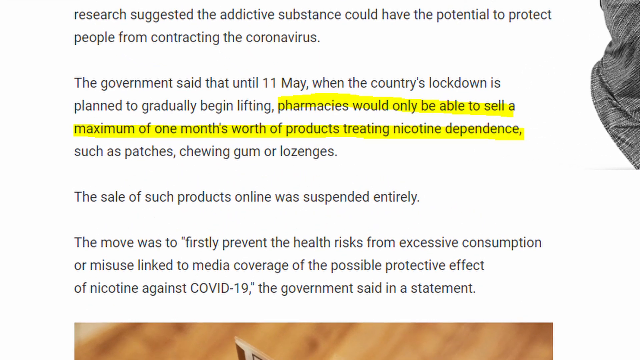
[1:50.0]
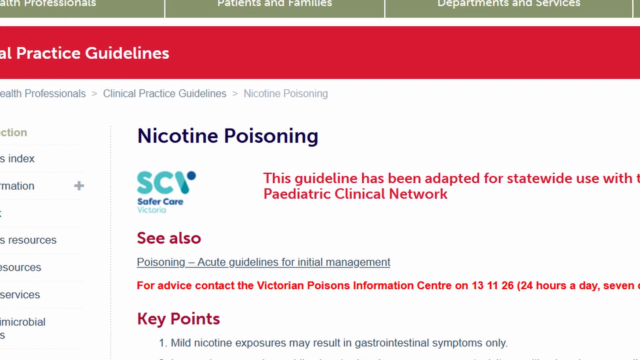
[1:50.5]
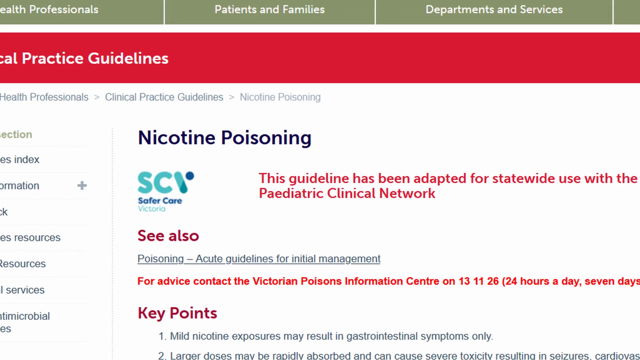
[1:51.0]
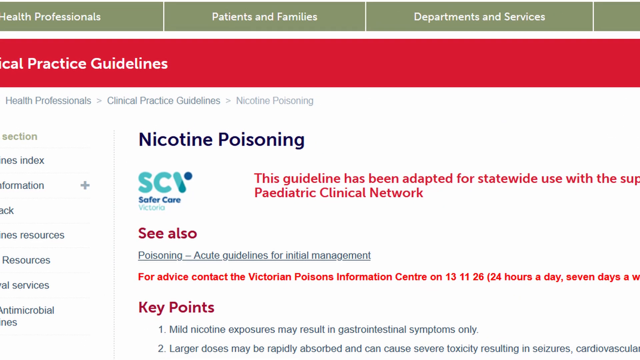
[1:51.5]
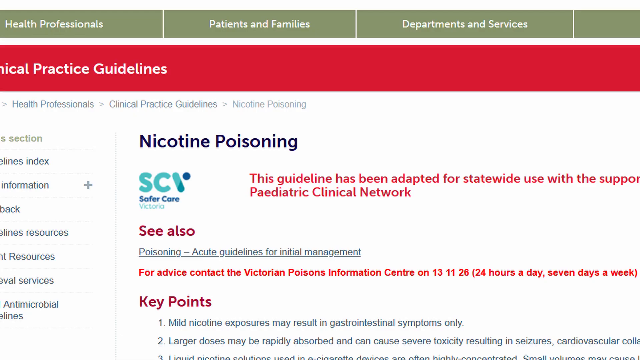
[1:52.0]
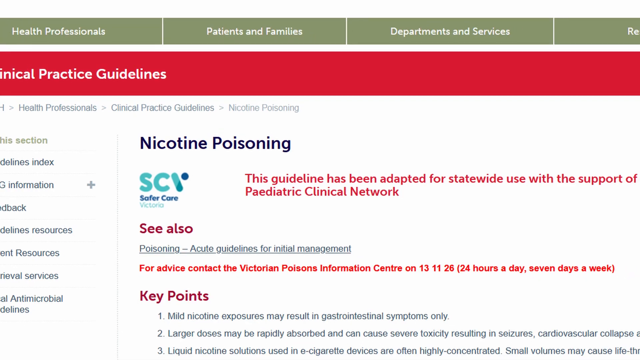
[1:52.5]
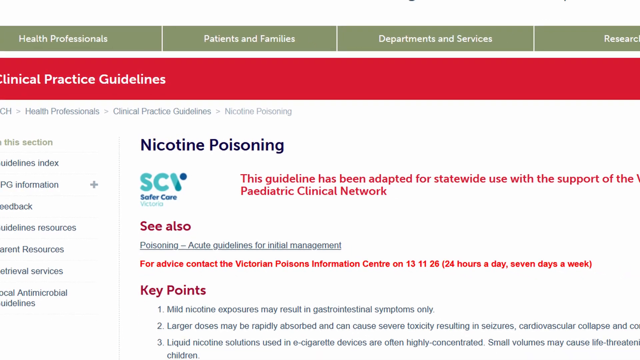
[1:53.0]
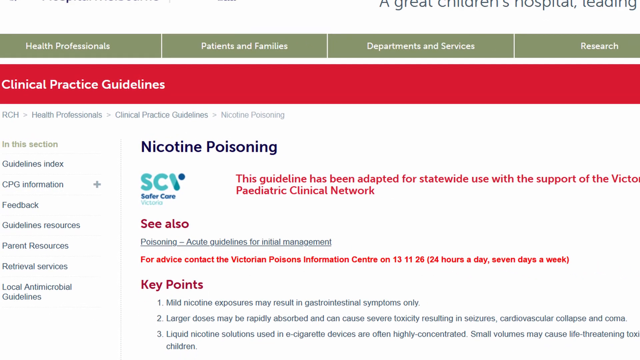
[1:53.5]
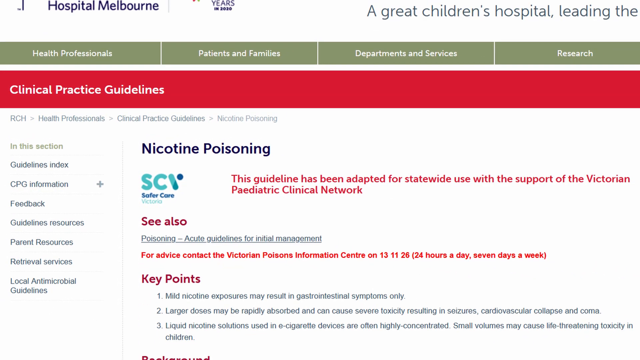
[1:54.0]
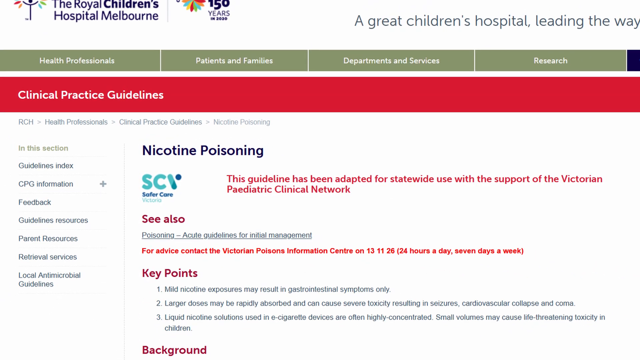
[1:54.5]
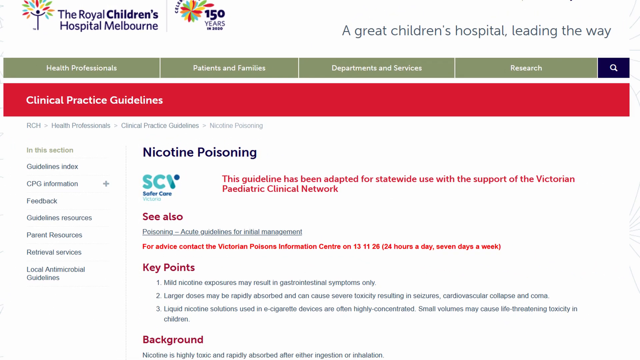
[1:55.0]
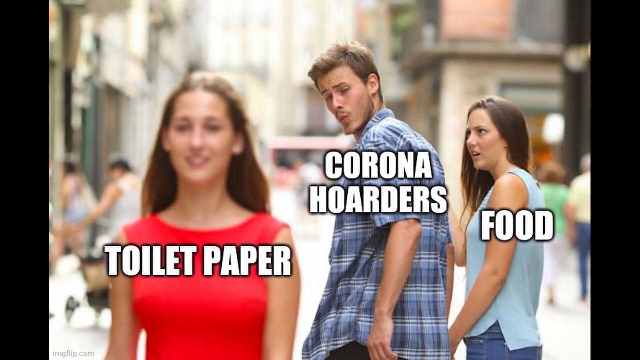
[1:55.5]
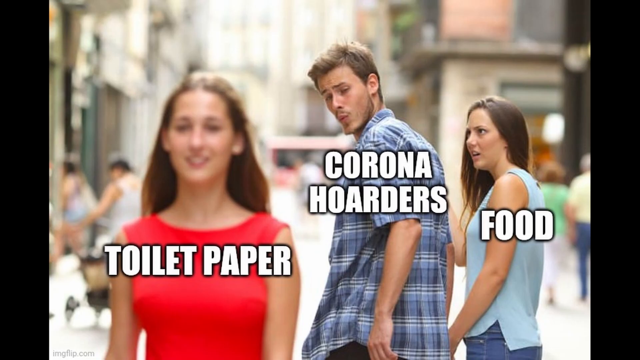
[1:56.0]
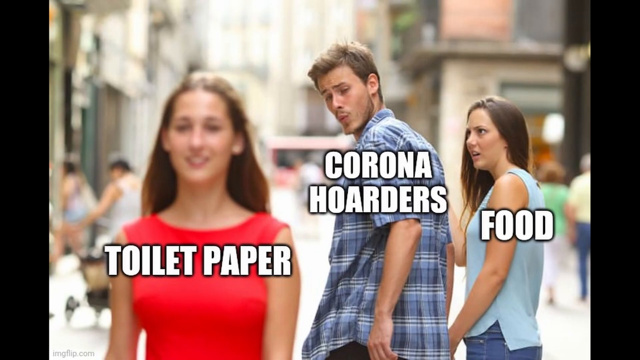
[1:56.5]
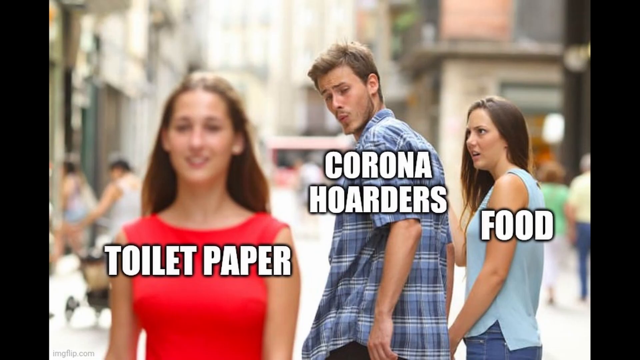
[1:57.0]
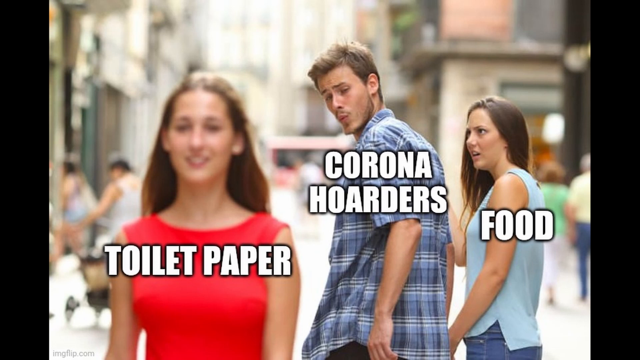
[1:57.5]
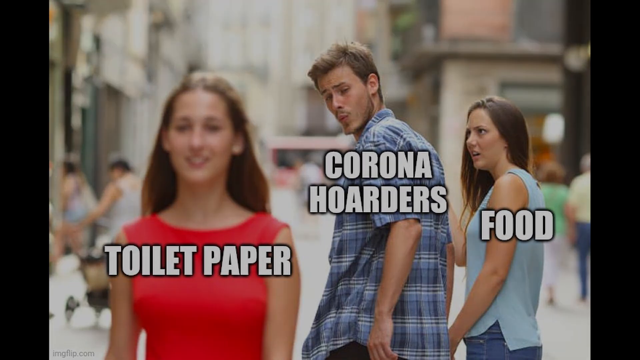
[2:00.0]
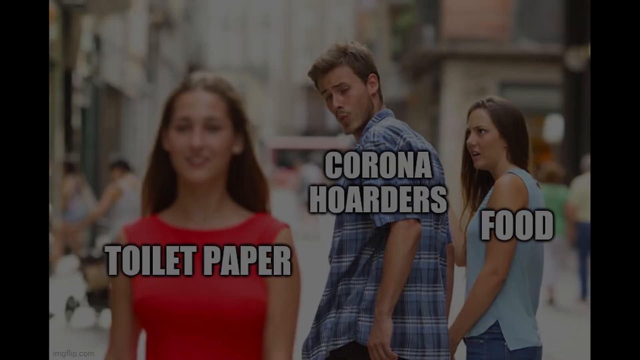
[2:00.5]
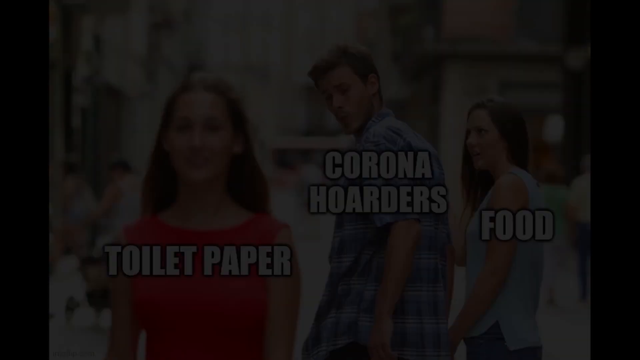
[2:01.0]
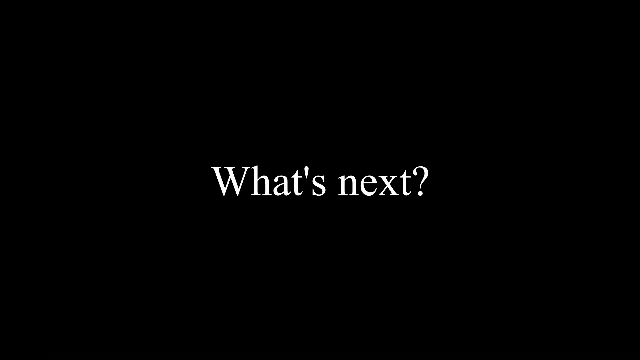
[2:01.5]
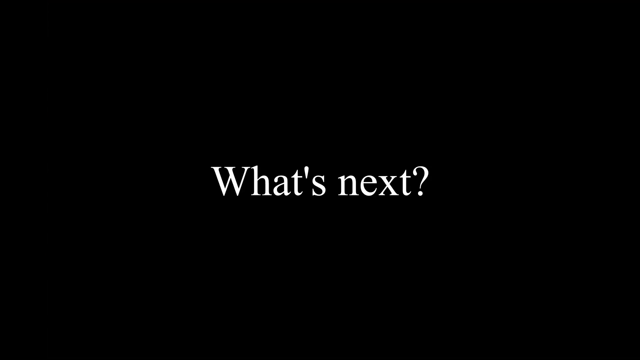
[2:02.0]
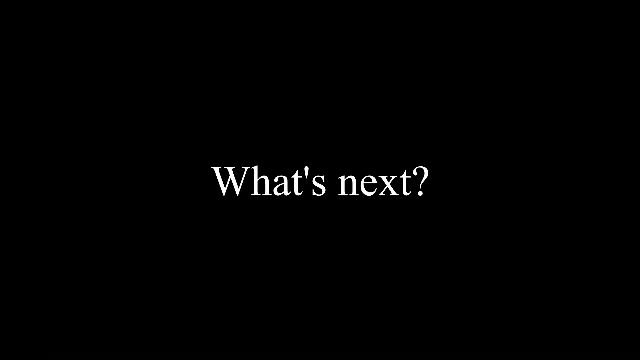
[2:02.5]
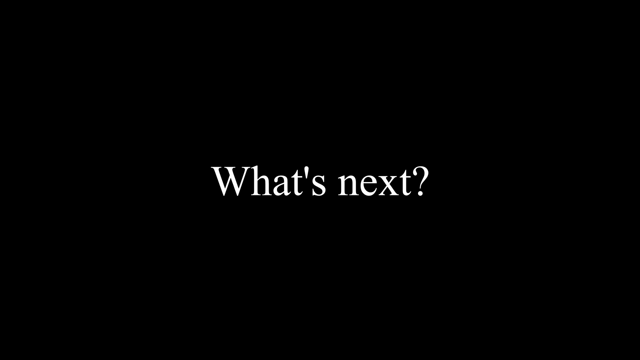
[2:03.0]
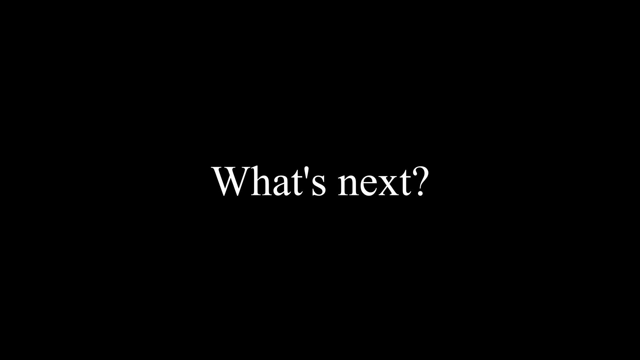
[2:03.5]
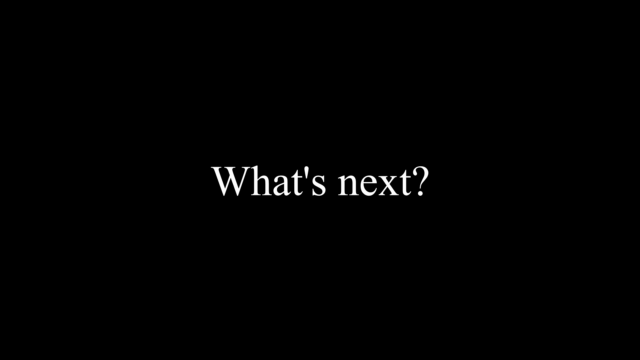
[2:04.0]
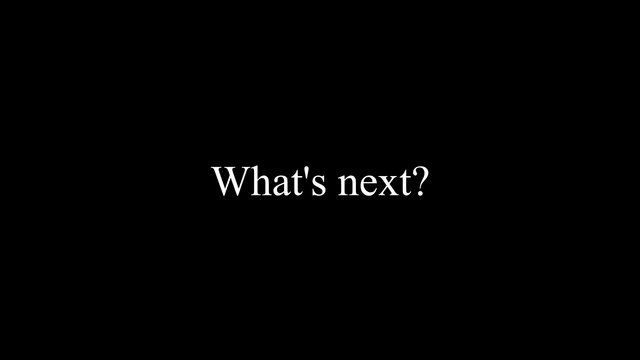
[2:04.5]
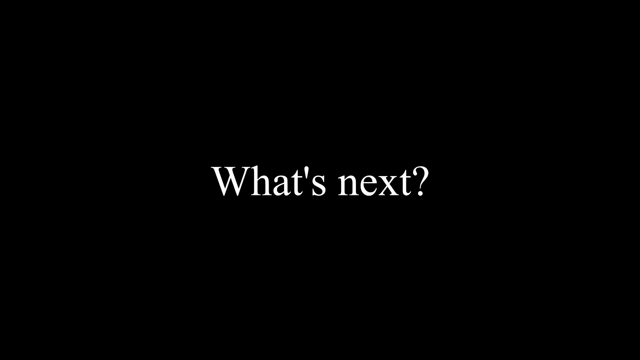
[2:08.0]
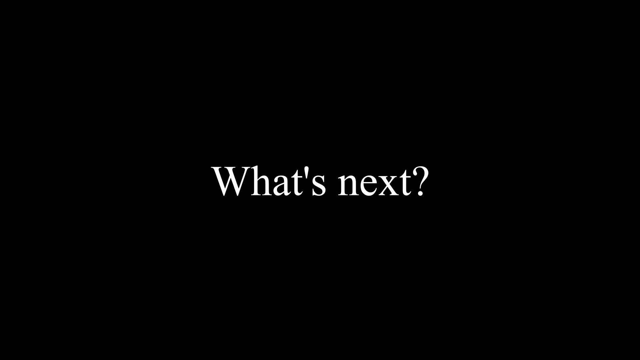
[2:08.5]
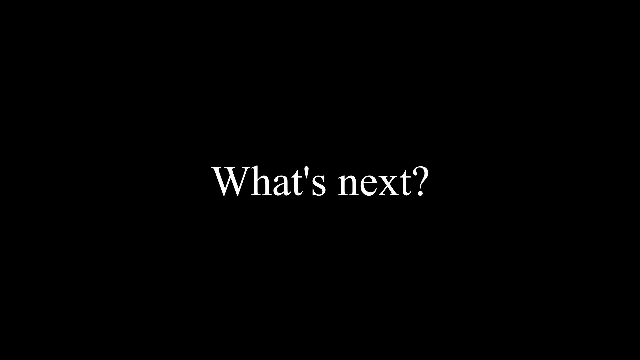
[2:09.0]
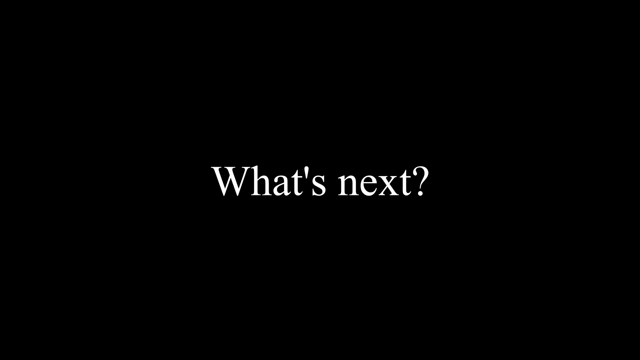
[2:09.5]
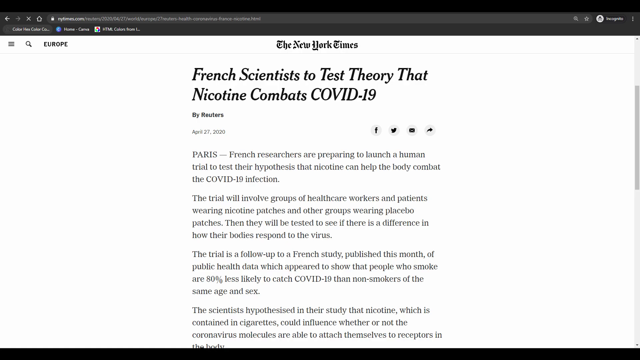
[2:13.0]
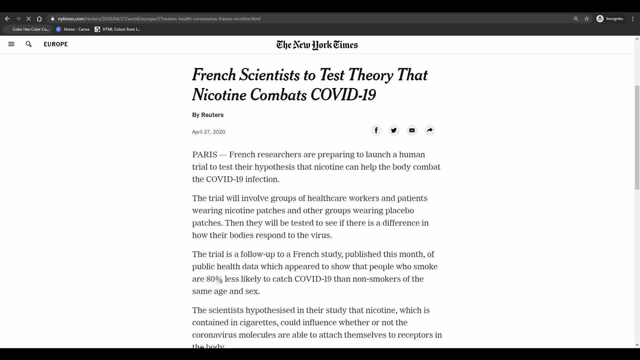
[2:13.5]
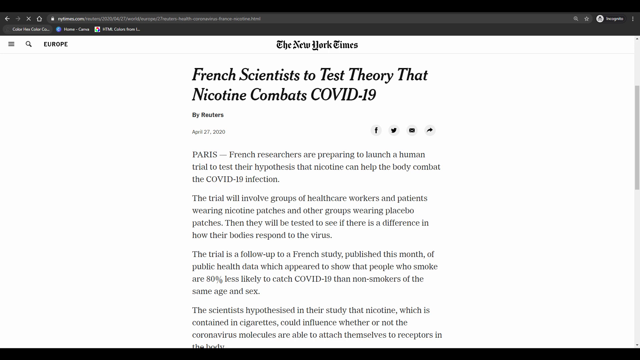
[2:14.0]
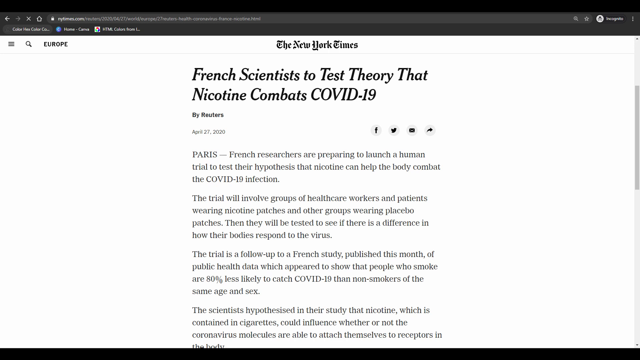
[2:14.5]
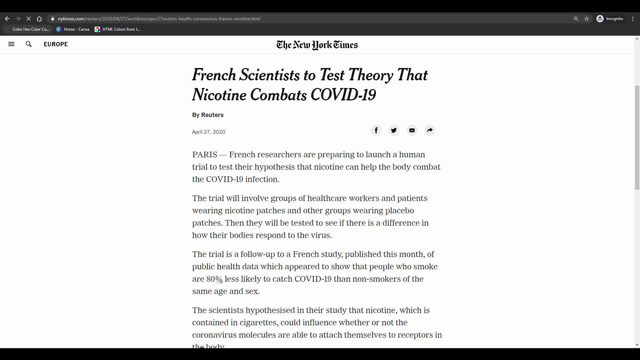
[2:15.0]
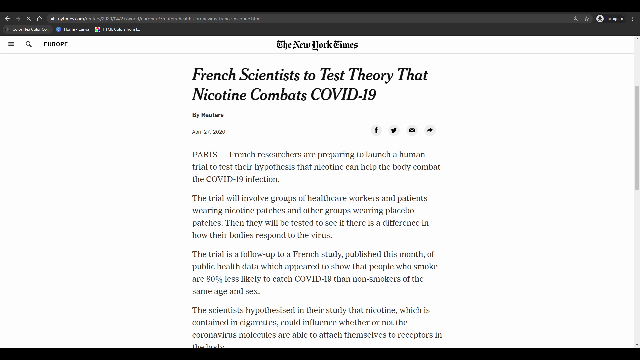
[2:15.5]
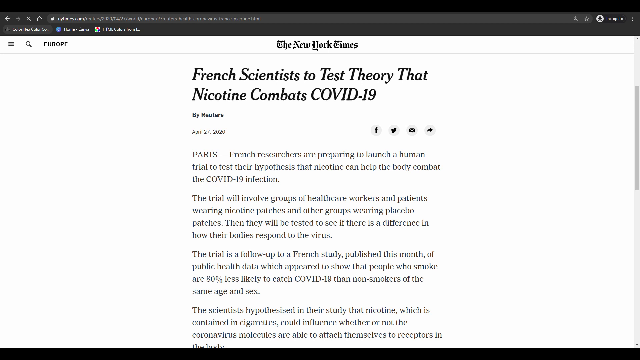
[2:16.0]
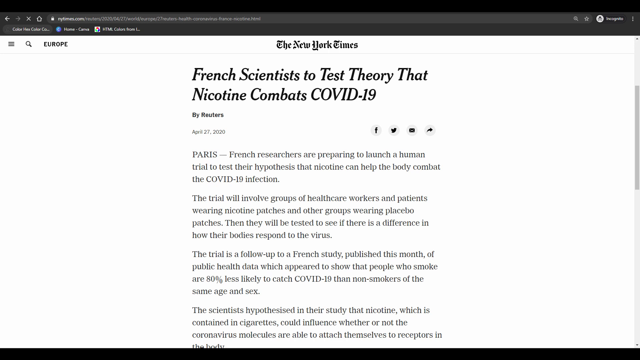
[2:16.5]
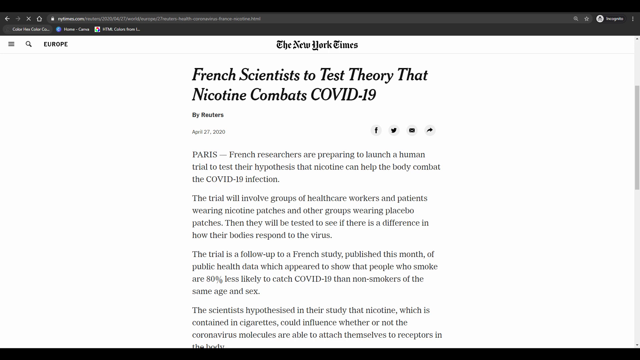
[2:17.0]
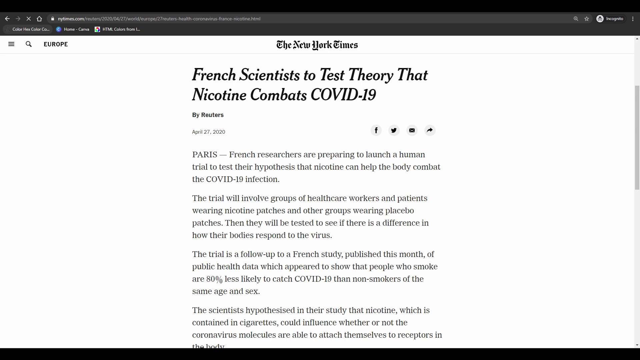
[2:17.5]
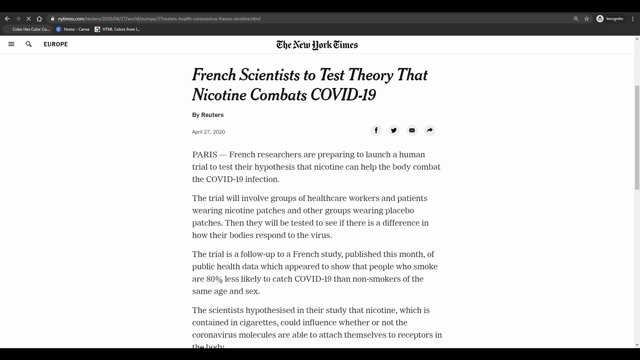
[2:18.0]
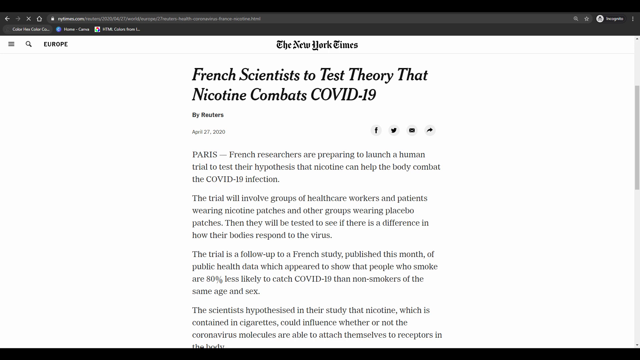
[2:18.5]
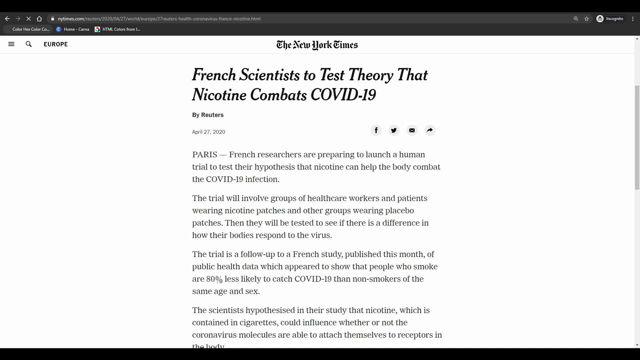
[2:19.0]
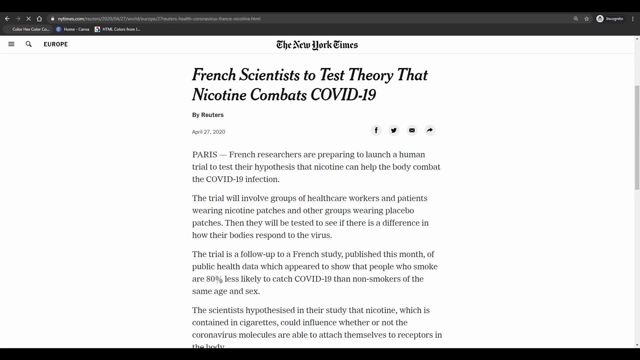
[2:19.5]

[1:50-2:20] A close-up of an online article shows the central paragraph, where a phrase from one sentence is highlighted in yellow: "pharmacies would only be able to sell a maximum of one month's worth of products, treating nicotine dependence." The yellow highlight then goes away. Next comes the website of a Royal Children's Hospital in Melbourne. A red banner across the top has white lettering that says "clinical practice guidelines." Below the banner is an article called "nicotine poisoning," which says "this guideline has been adapted for statewide use with the support of the Victorian Pediatric Clinical Network." The scene switches to a famous internet meme. On the left, an attractive young woman in a red dress walks toward the camera, labeled "toilet paper." Behind her, a man in a blue short-sleeved check shirt turns around to whistle at her and stare, labeled "Corona hoarders." Beside him on the right-hand side of the screen is his apparent girlfriend, another attractive woman with dark brown hair and a sleeveless blue shirt, looking aghast at her boyfriend and labeled "food." The scene switches again to a black screen where the words "what's next" appear. Then a New York Times article appears with the headline "French Scientists to Test Theory That Nicotine Combats COVID-19."